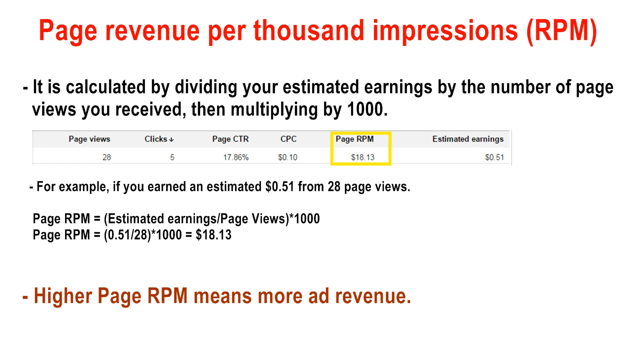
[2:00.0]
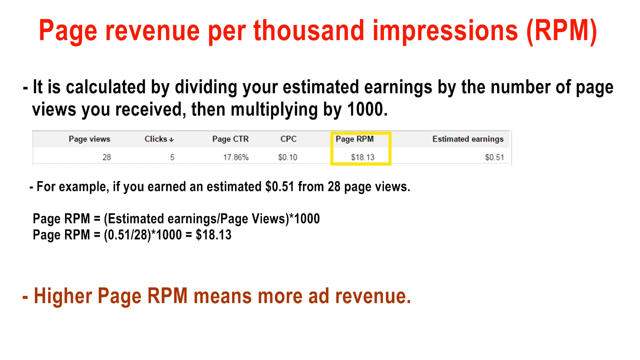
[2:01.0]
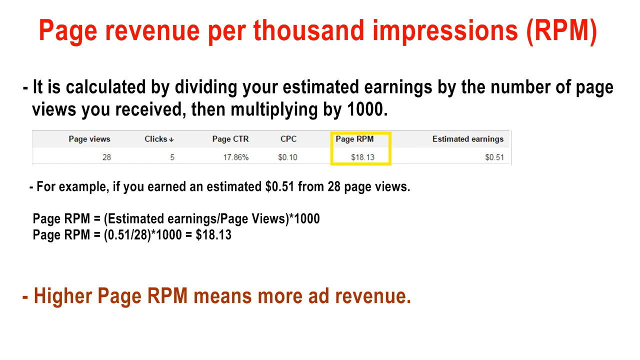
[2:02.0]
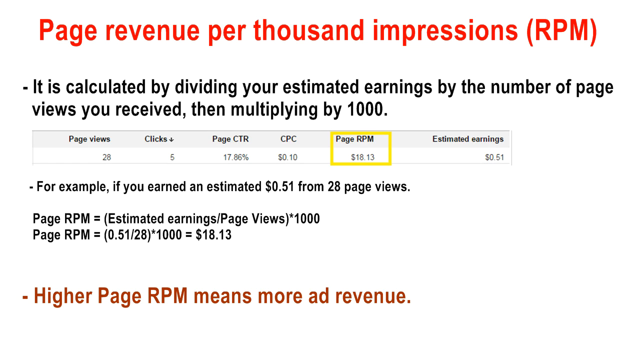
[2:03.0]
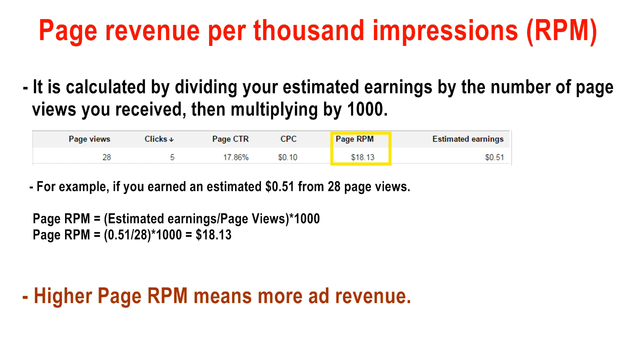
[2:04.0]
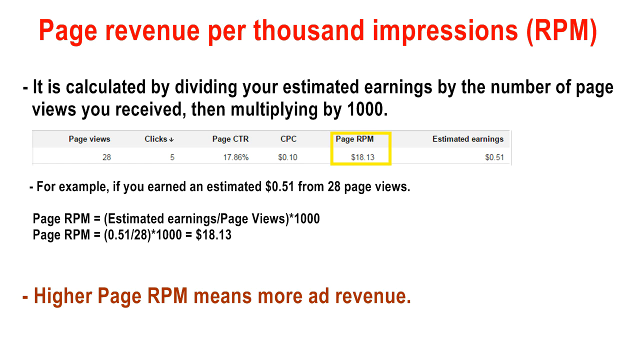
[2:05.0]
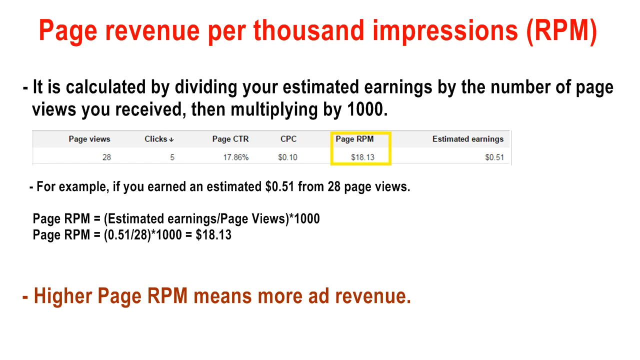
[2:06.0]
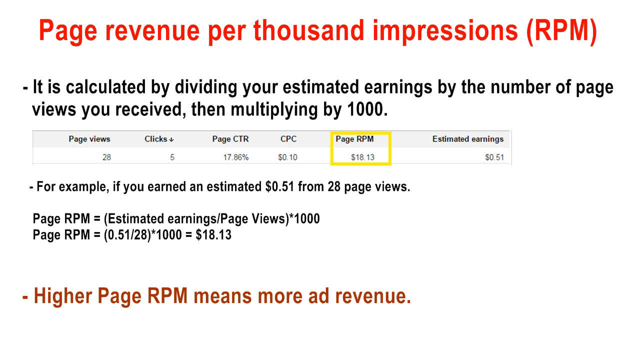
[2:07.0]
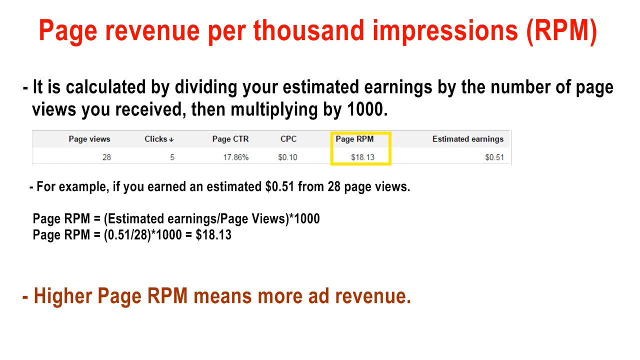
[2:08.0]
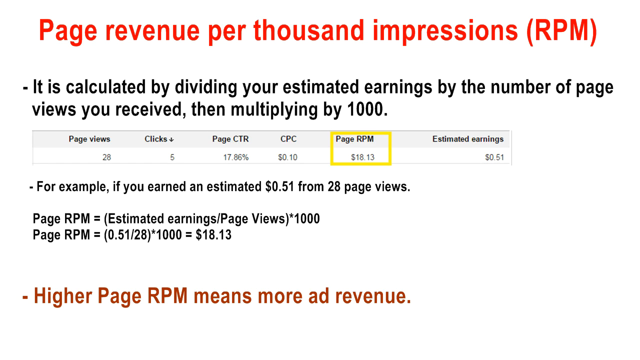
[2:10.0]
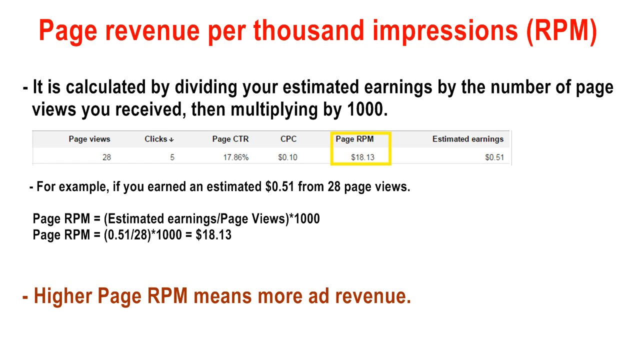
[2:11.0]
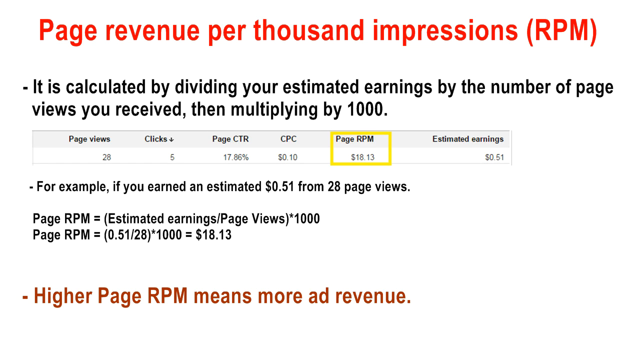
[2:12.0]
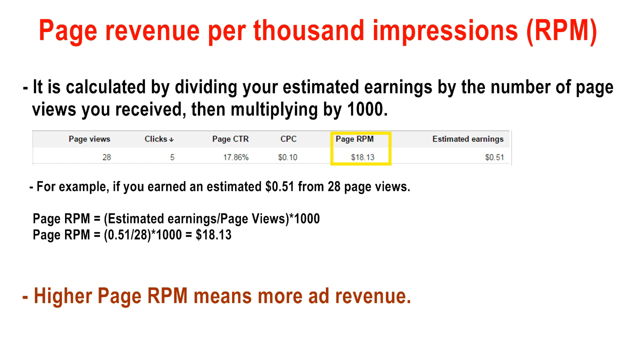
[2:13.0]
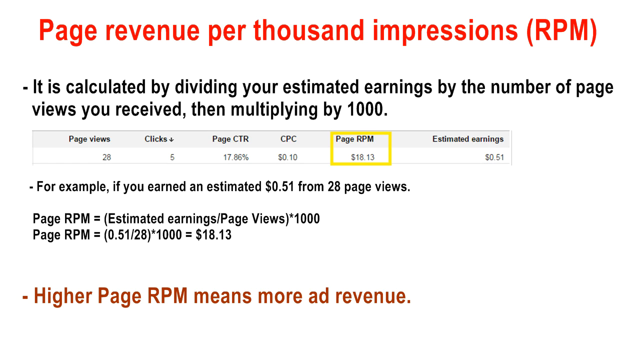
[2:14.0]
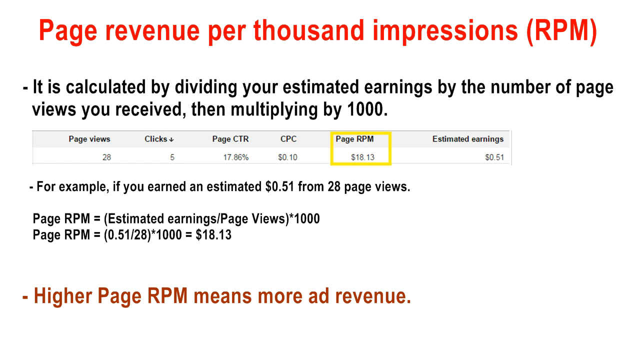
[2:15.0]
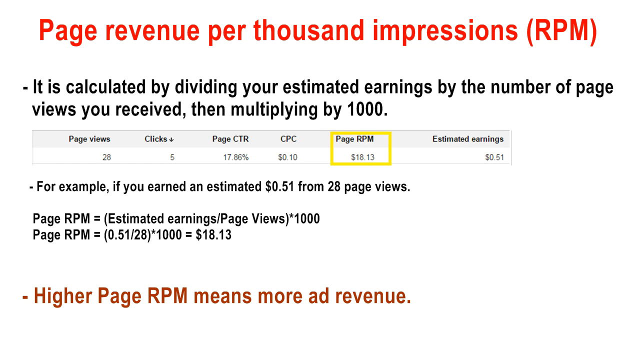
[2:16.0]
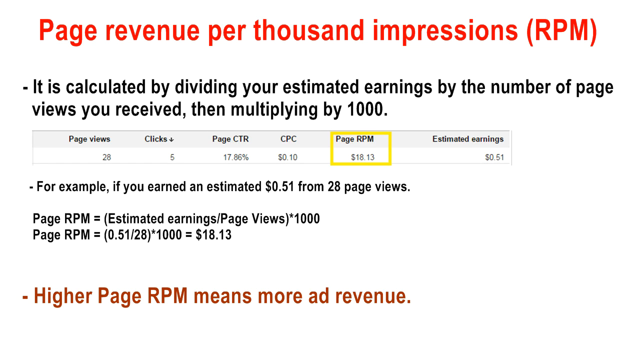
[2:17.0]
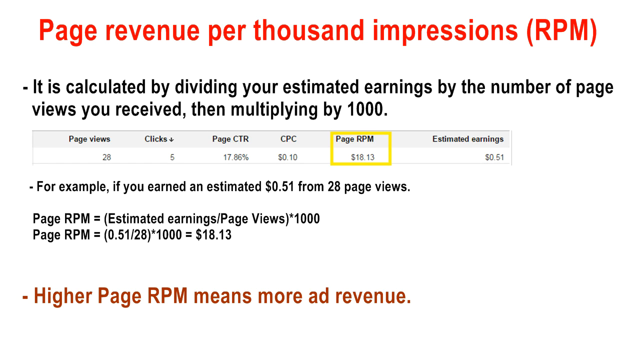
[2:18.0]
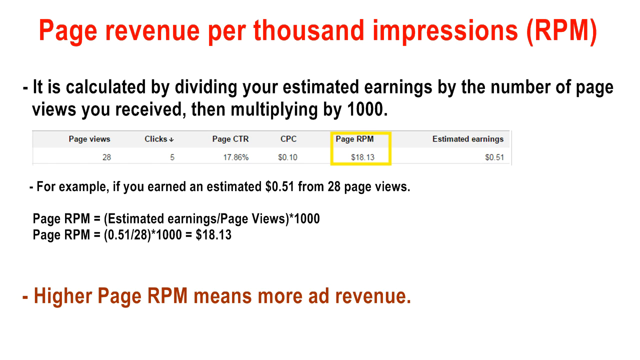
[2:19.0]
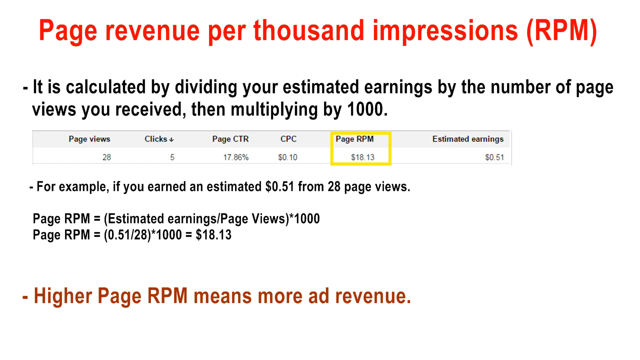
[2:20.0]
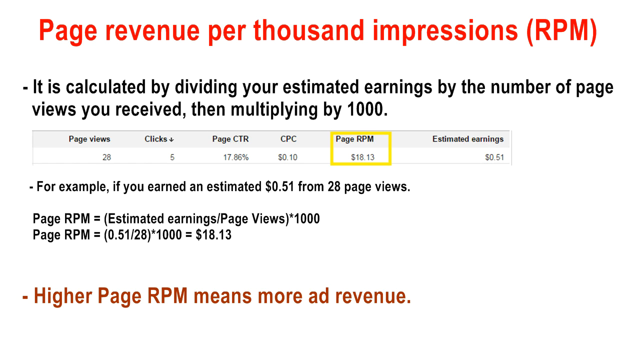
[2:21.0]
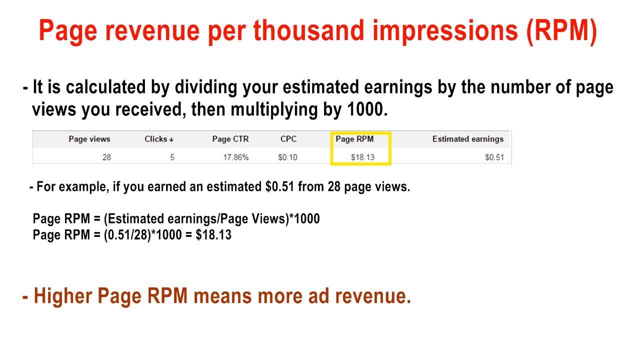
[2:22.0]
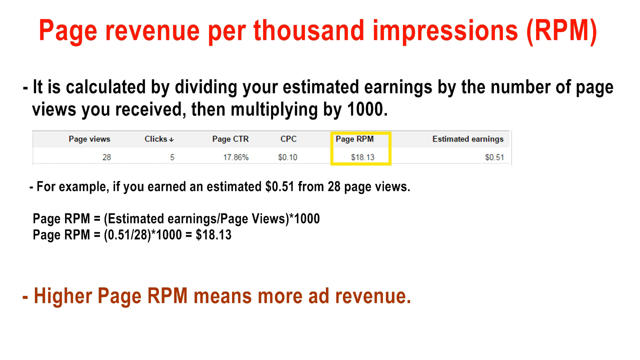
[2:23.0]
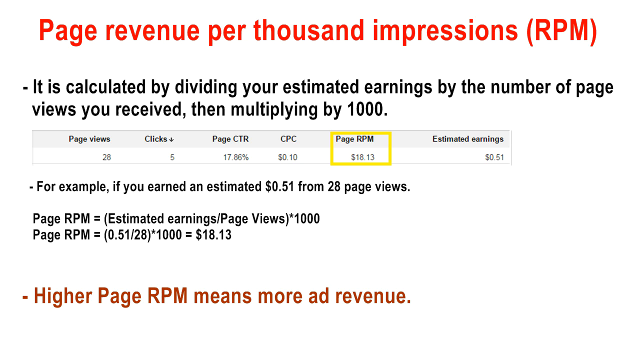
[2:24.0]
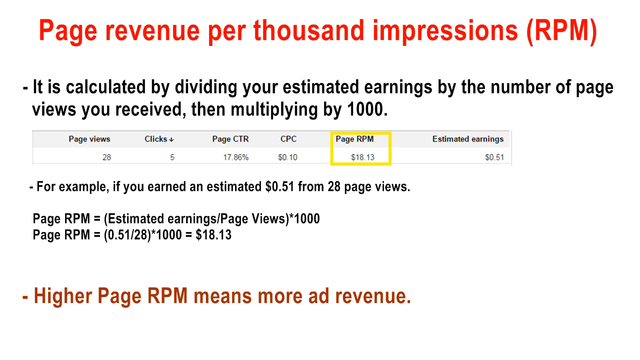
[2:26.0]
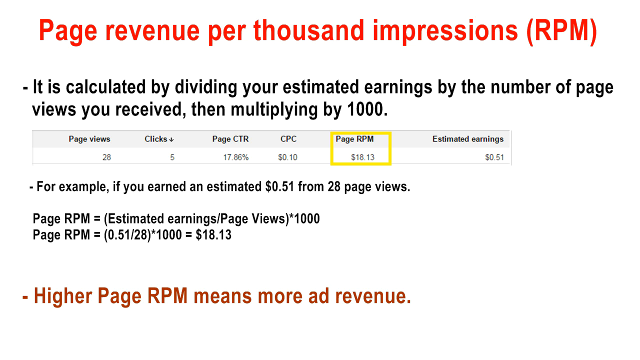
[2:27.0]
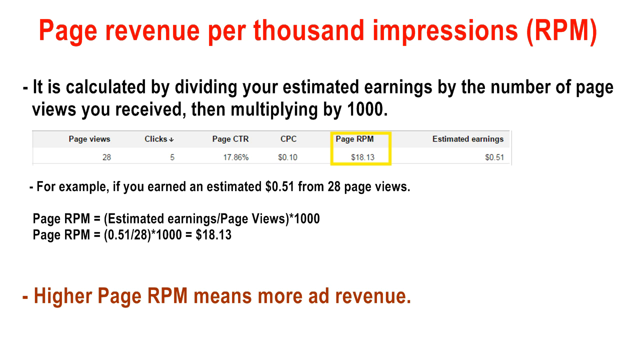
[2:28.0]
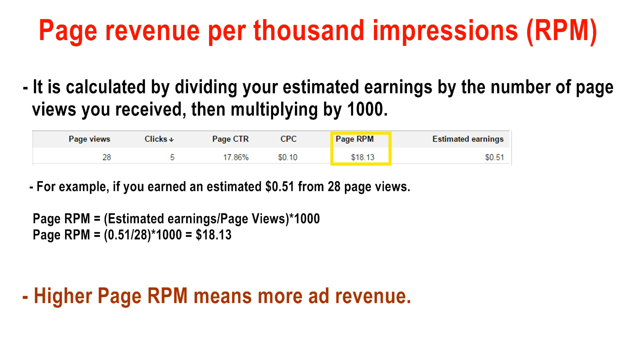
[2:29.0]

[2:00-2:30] The screen has a white background with red lettering reading "Page revenue per thousand impressions", the RPM. A yellow box surrounds the Page RPM example, which shows an amount of $18.13. The line stating that a higher page RPM means more ad revenue is also in red lettering. The page explains the calculation: for example, with estimated earnings of 51 cents from 28 page views, the page RPM is the estimated earnings divided by the page views times 1000, which equals $18.13.